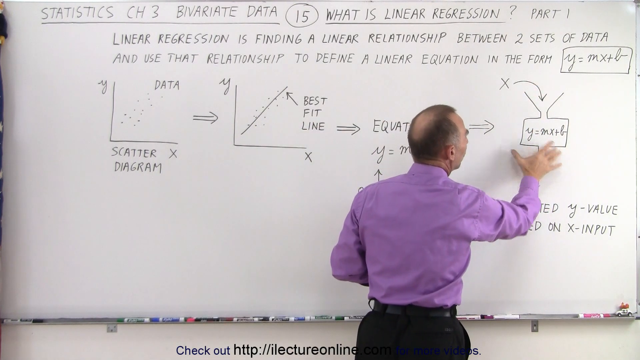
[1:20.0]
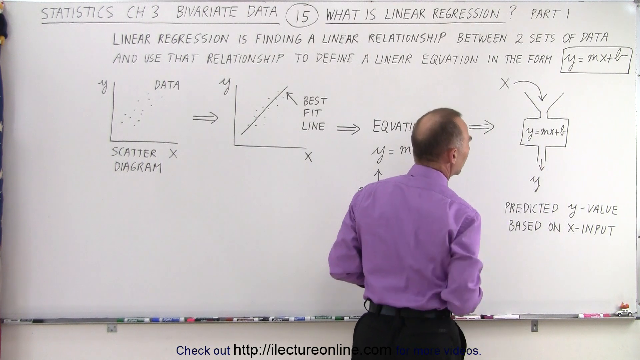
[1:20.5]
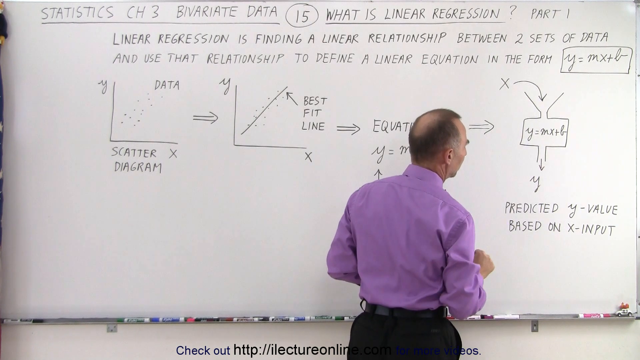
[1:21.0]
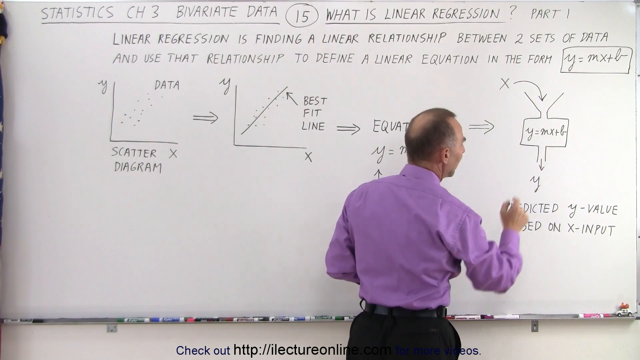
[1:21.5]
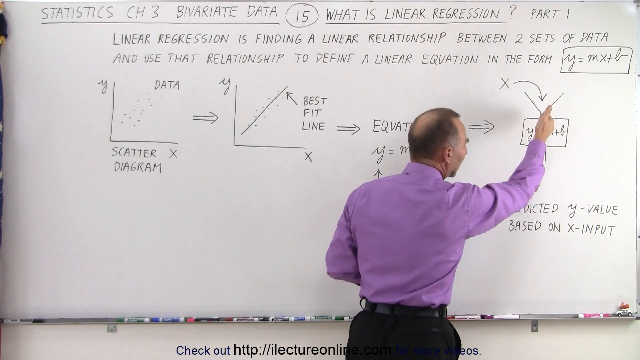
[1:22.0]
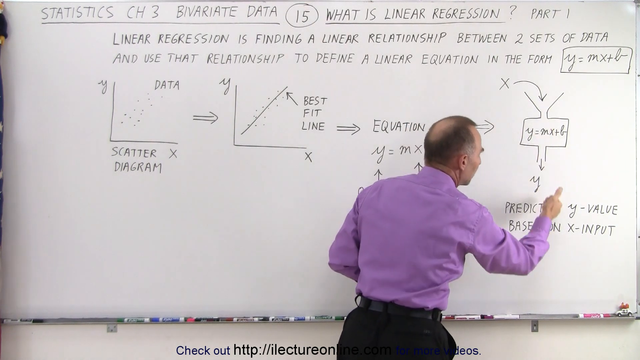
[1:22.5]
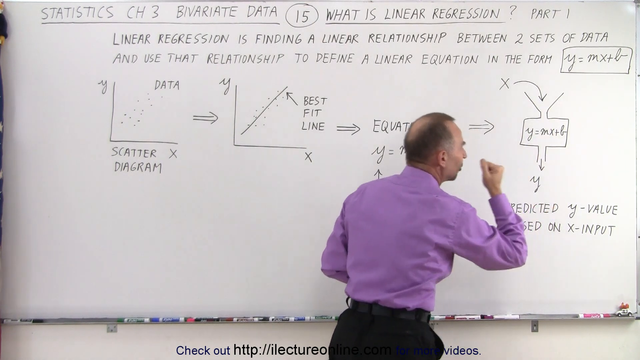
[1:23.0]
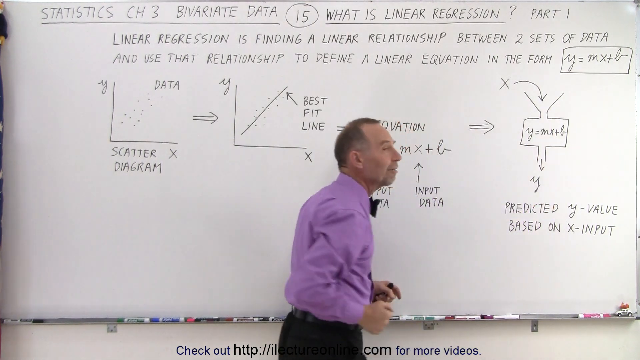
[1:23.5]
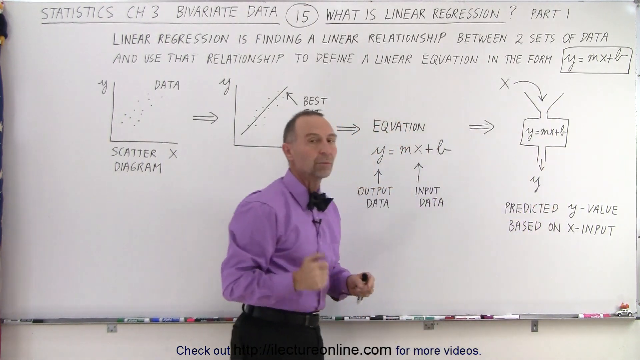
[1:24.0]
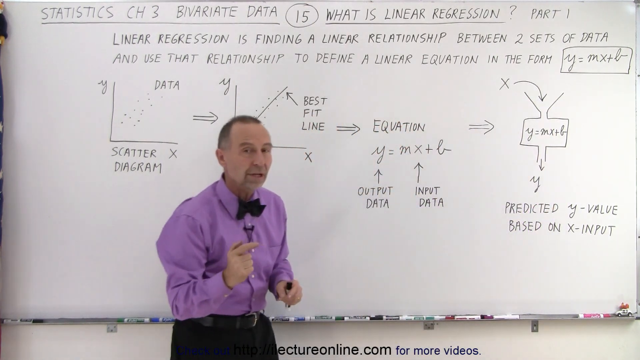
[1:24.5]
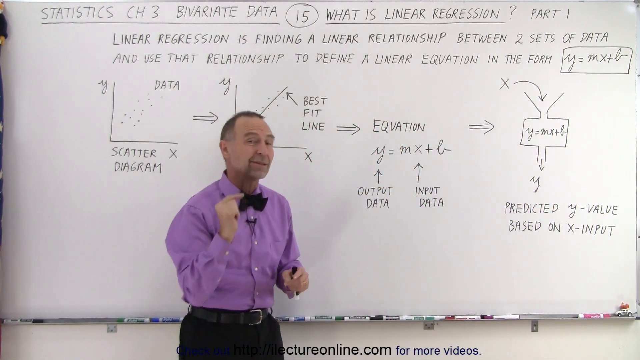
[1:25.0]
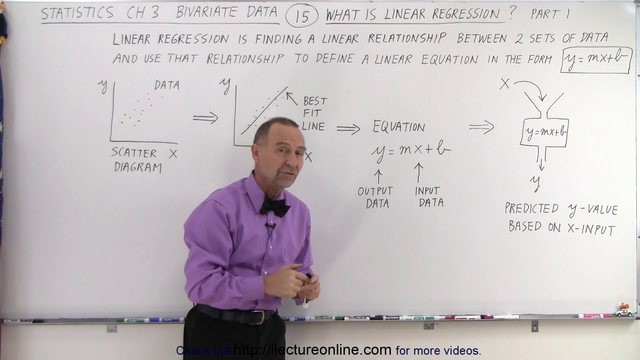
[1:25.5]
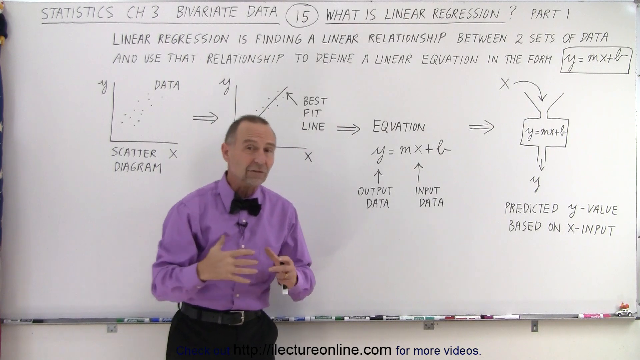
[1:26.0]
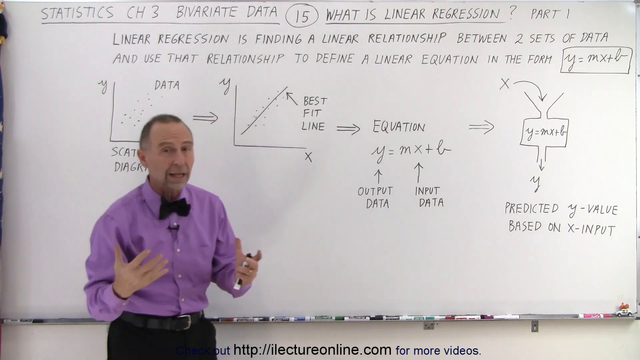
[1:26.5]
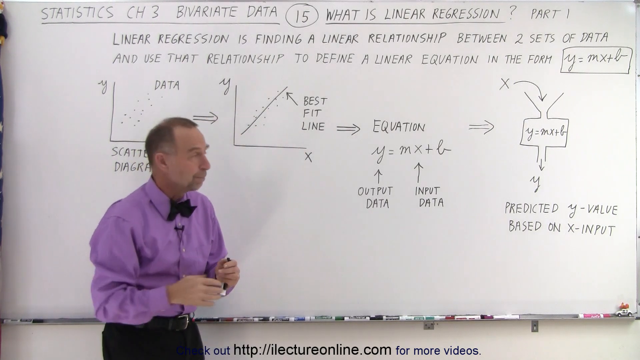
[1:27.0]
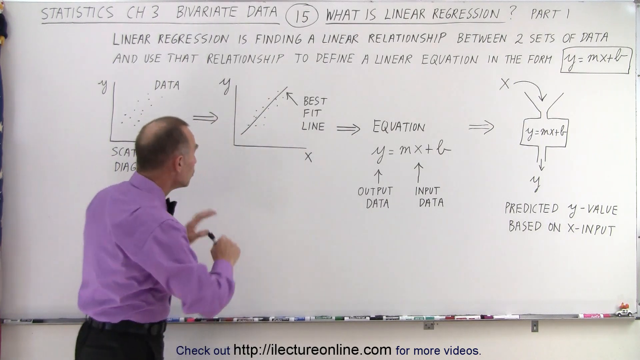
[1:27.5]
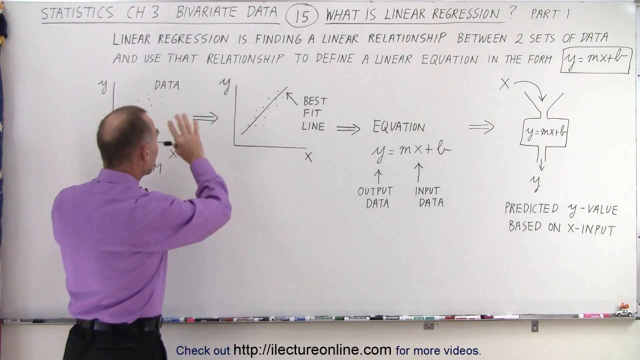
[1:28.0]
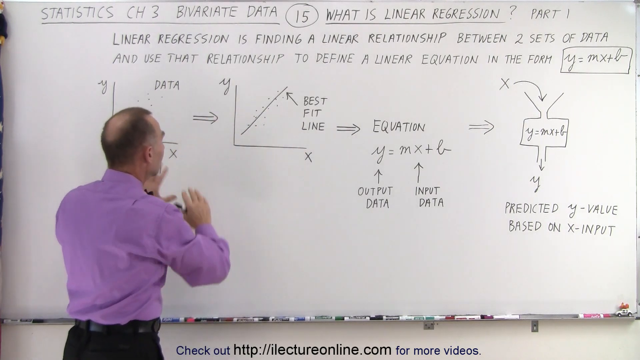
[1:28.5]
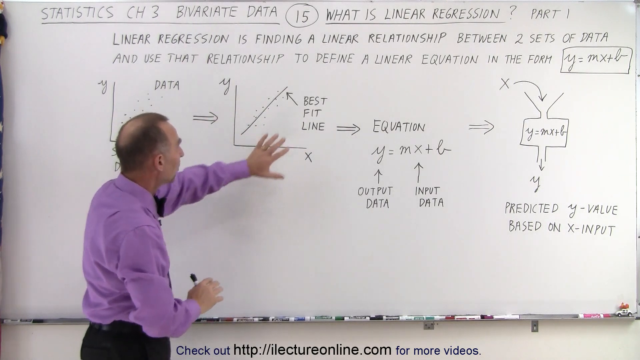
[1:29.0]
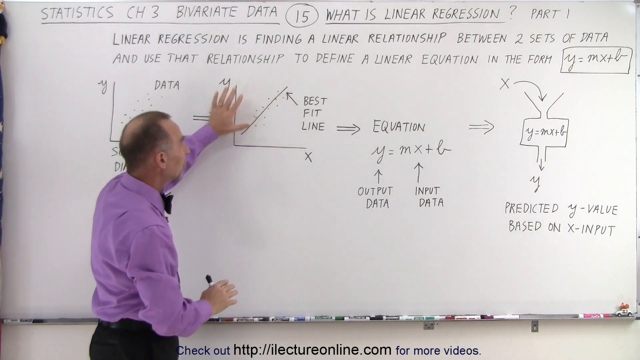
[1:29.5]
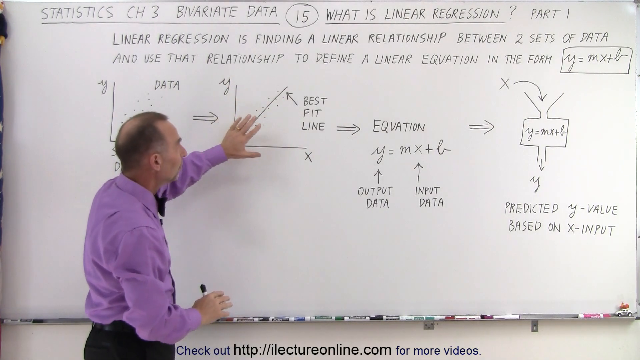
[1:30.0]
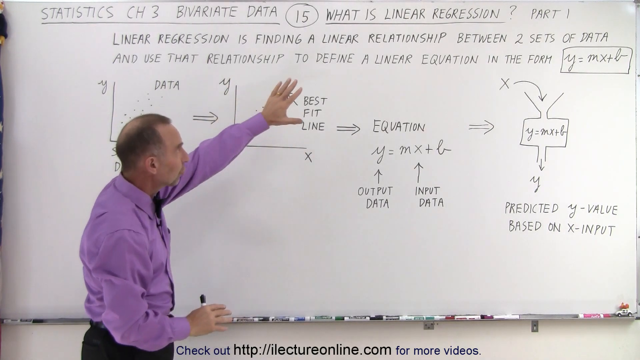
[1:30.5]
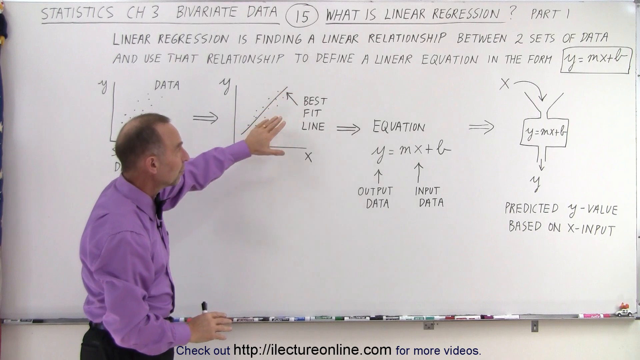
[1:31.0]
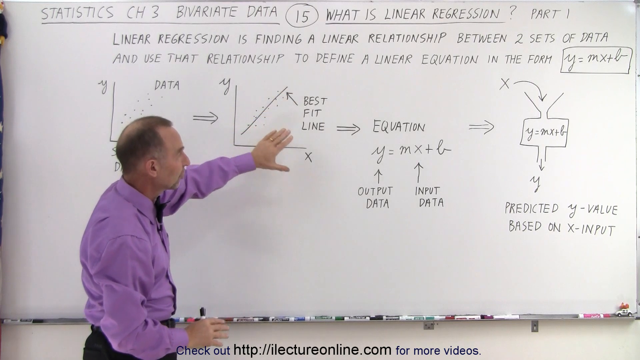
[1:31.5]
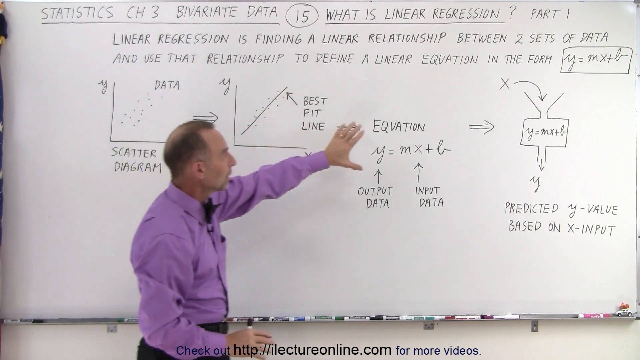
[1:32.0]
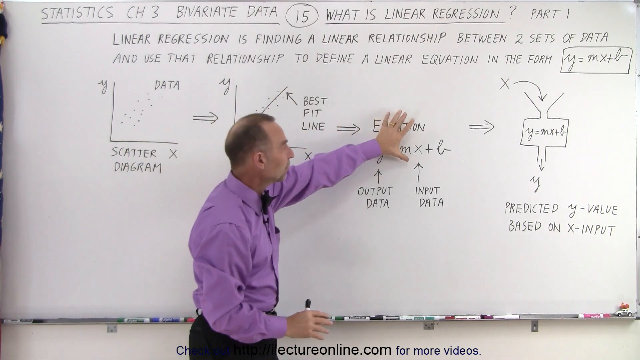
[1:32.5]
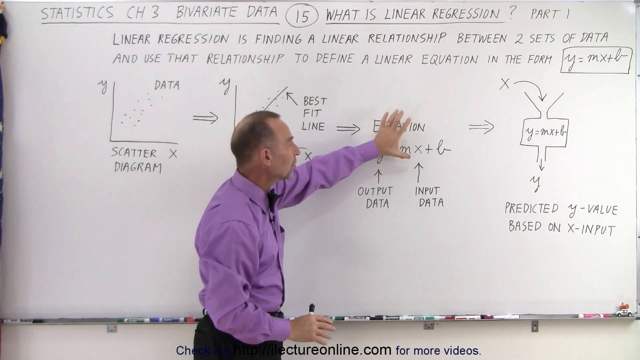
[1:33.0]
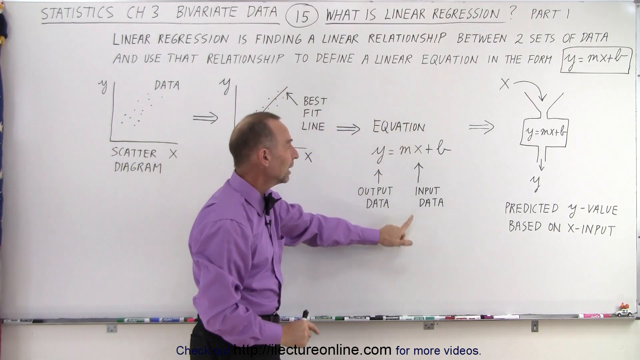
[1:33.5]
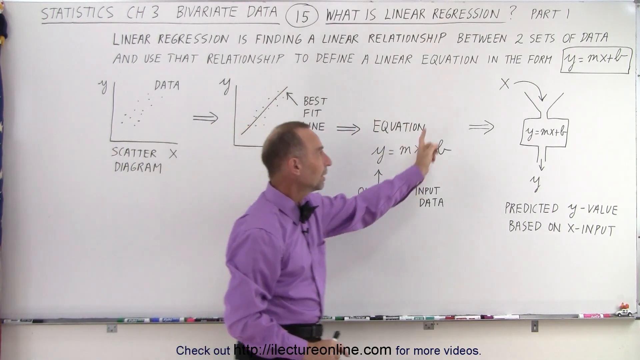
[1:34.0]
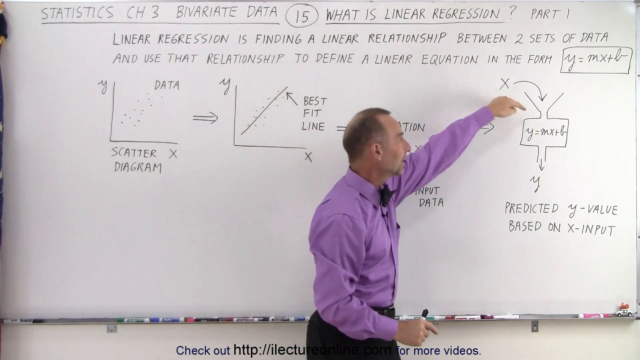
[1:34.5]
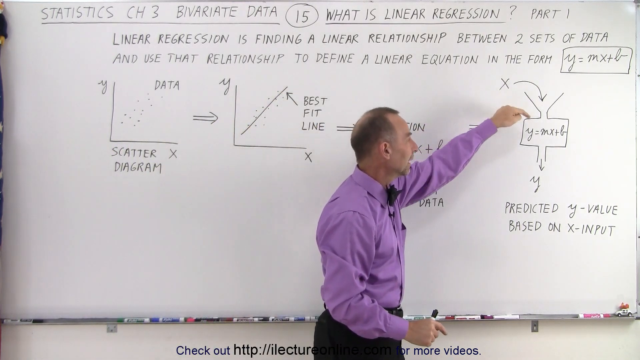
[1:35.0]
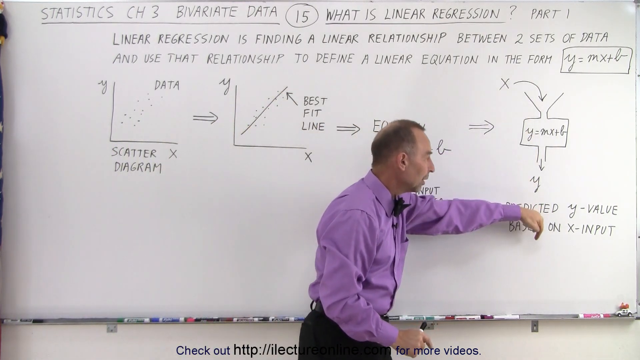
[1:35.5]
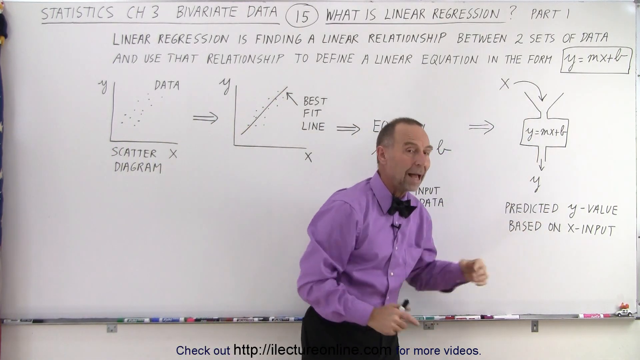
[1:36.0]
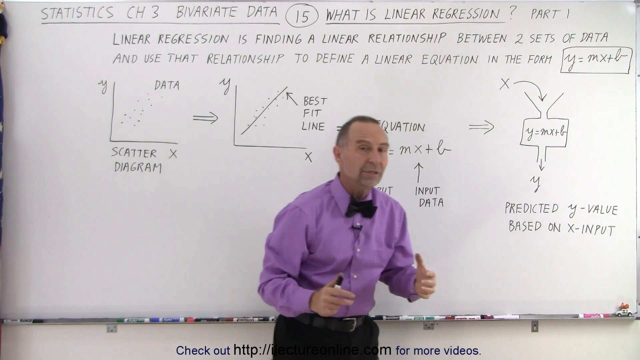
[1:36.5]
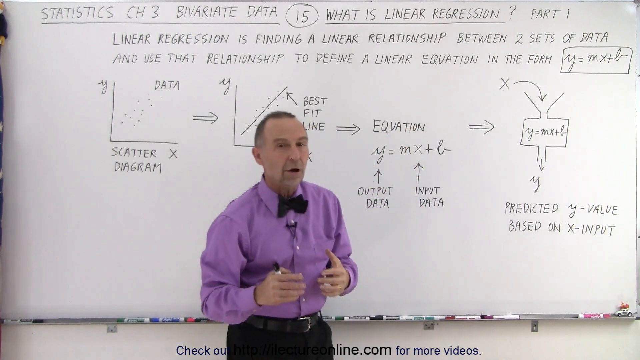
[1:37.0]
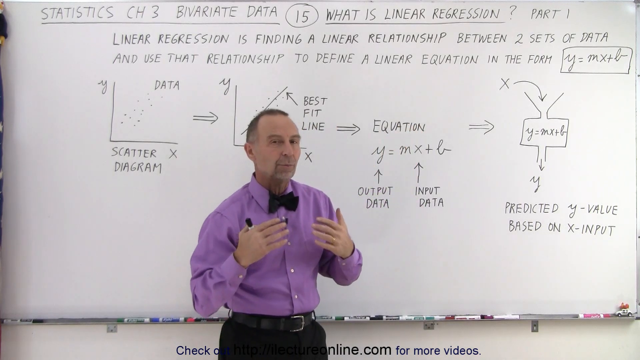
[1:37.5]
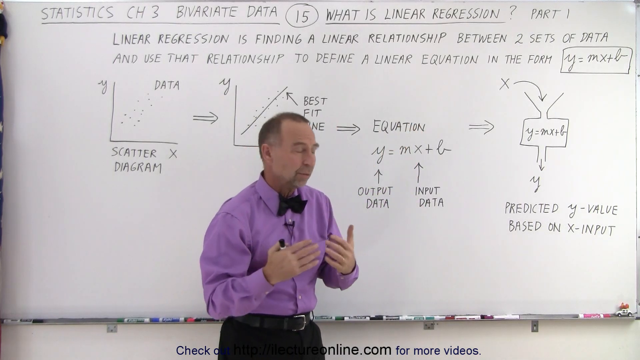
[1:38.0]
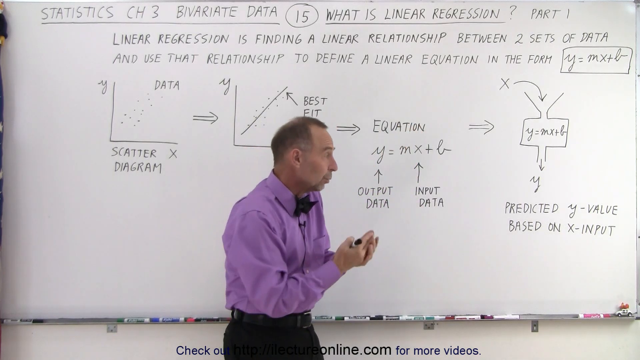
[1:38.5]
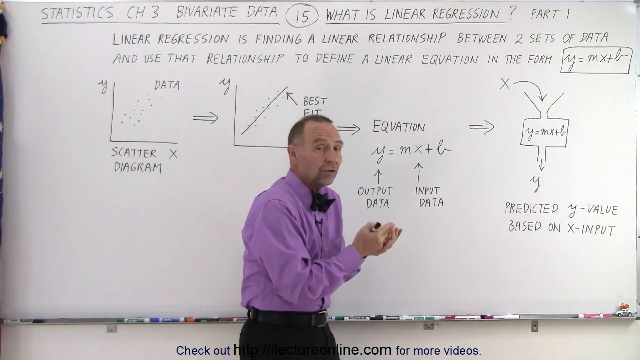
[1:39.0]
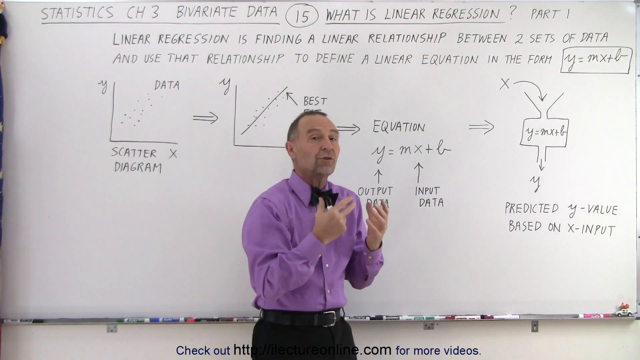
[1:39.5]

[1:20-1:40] At the top far left there is an unidentifiable object, more visible now than earlier. The lecturer reaches the last stage of his lecture plan, the x part of the explanation, using his hands to point at what he is explaining. The board includes an explanation about predicted values. He then goes back to the first steps and explains through to the last key point of the plan. Nothing has been added or removed from the scene.